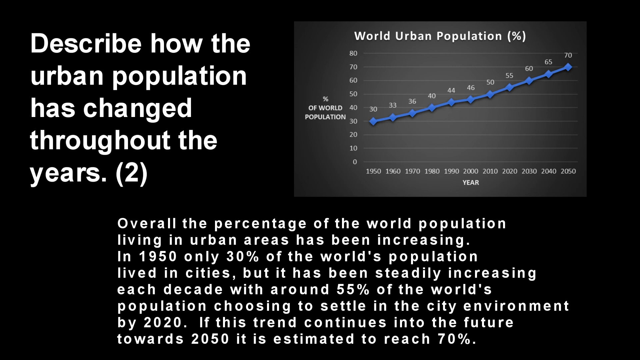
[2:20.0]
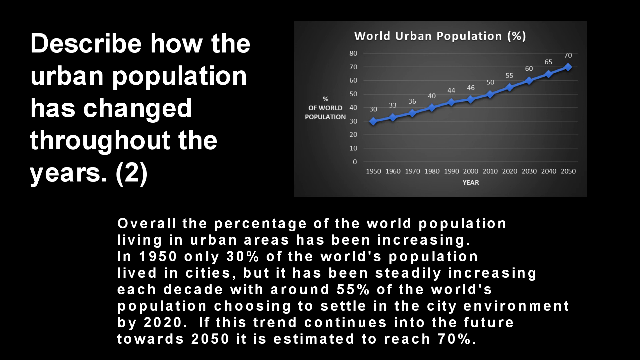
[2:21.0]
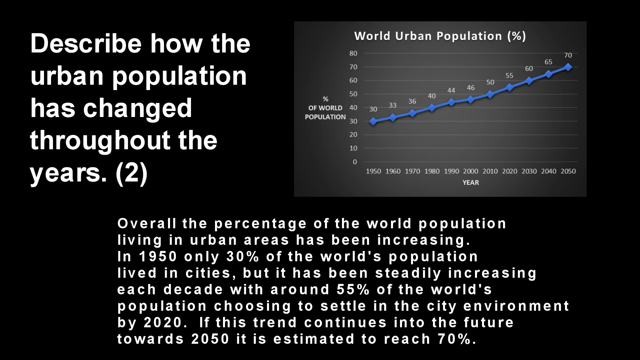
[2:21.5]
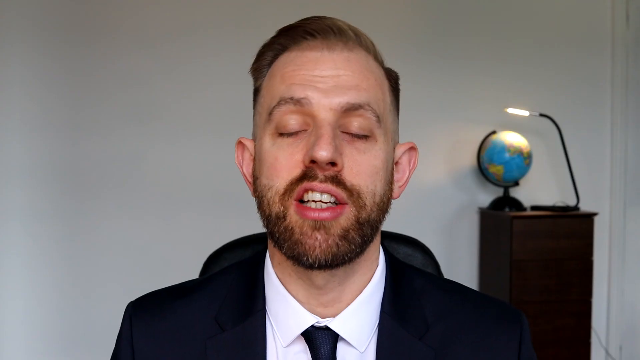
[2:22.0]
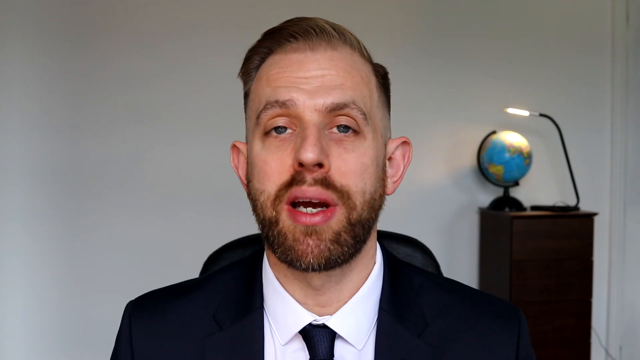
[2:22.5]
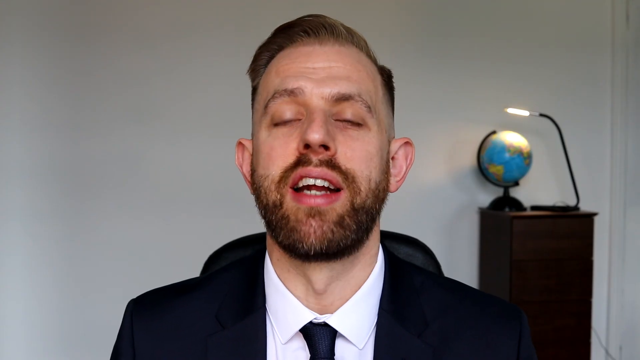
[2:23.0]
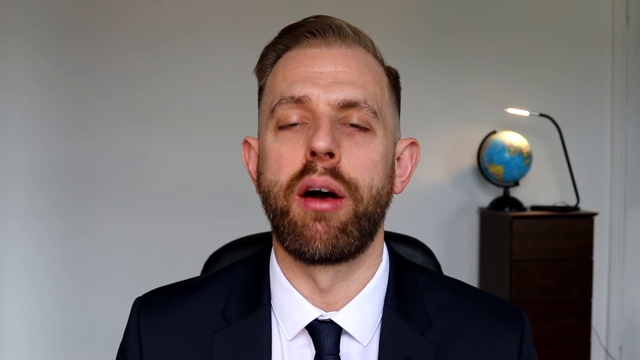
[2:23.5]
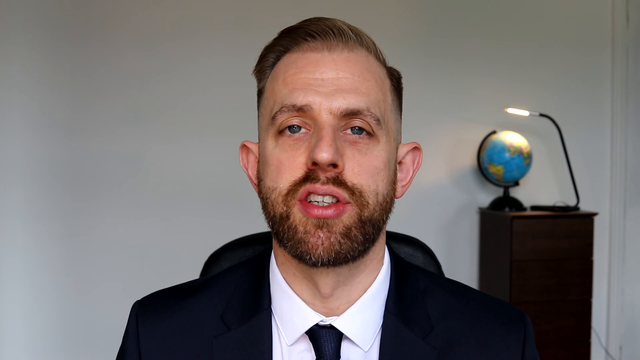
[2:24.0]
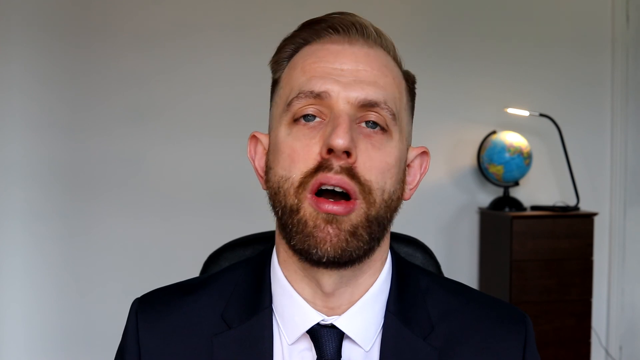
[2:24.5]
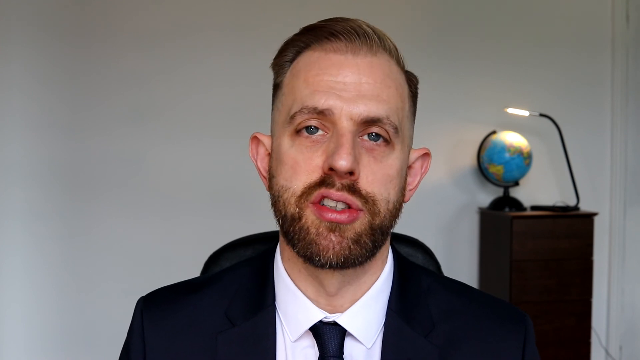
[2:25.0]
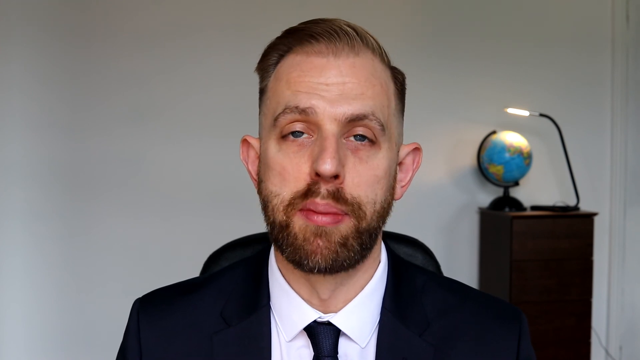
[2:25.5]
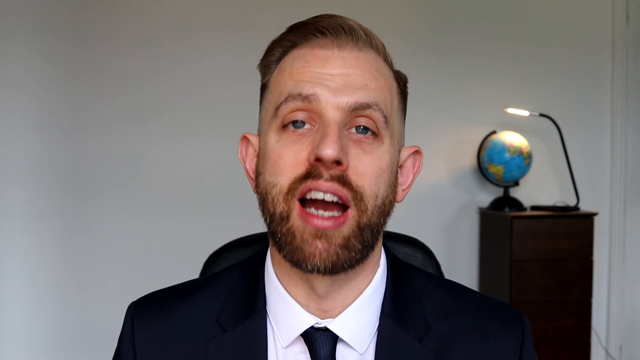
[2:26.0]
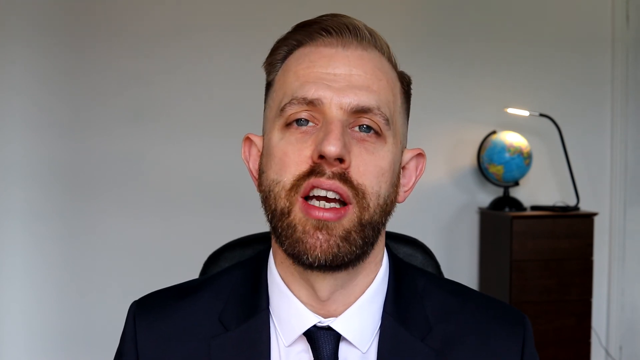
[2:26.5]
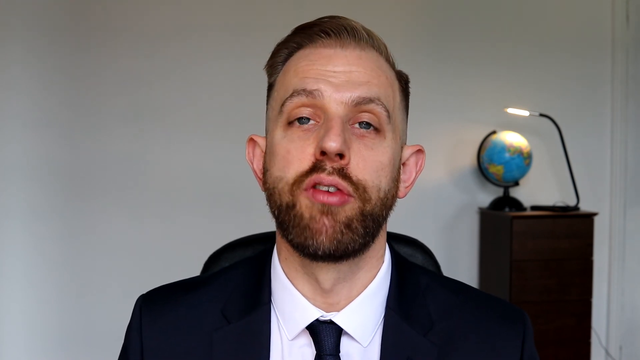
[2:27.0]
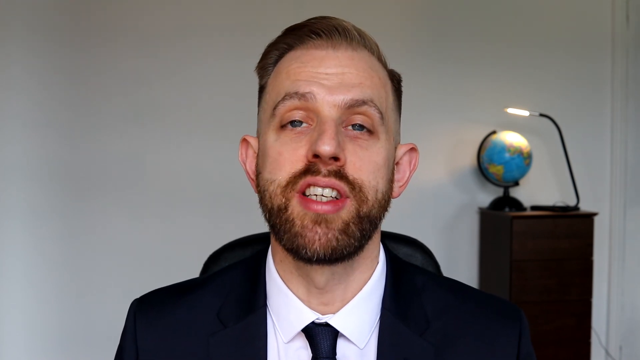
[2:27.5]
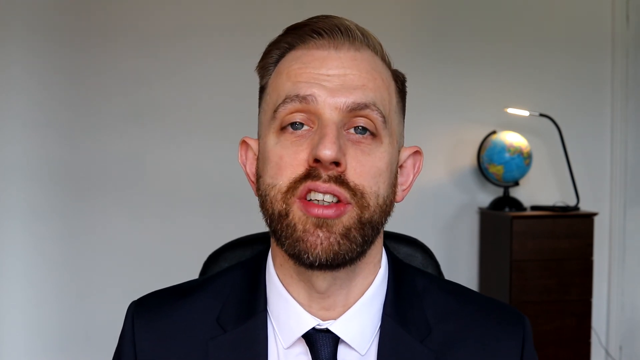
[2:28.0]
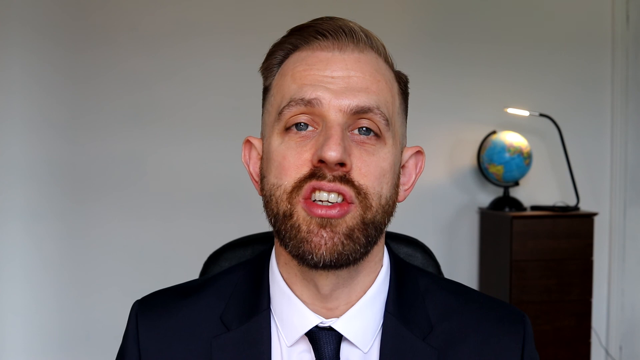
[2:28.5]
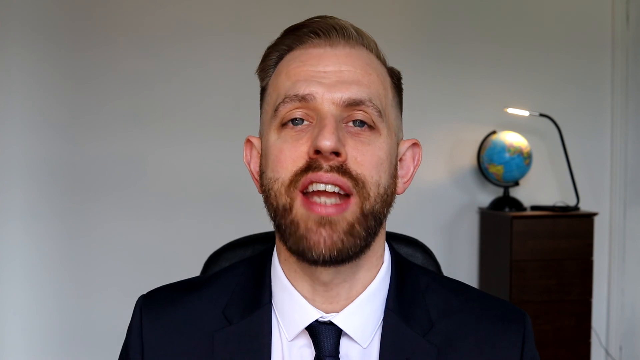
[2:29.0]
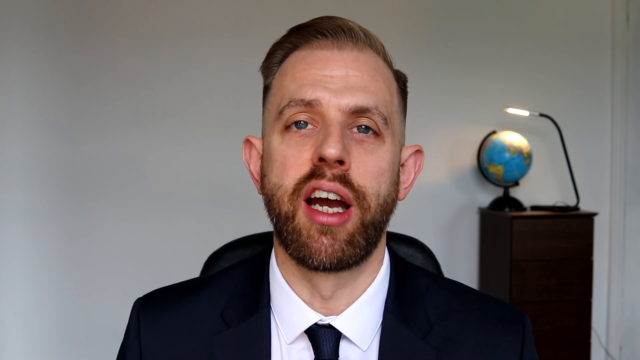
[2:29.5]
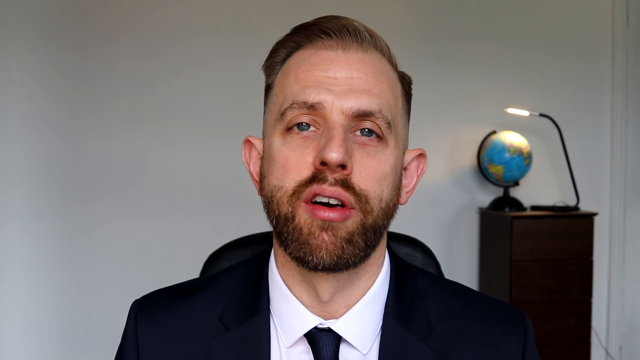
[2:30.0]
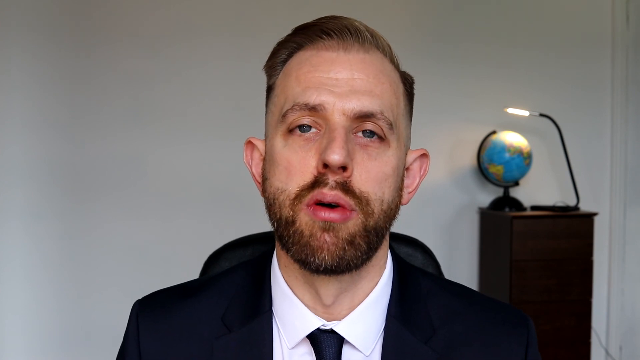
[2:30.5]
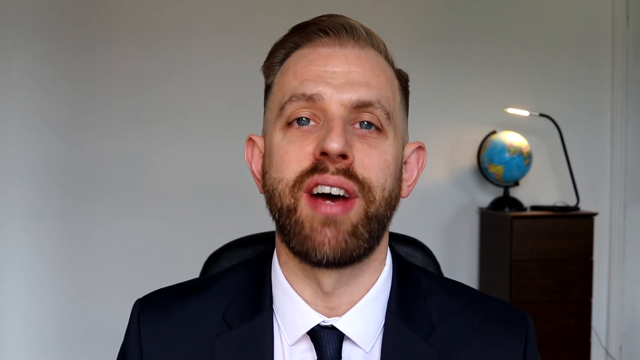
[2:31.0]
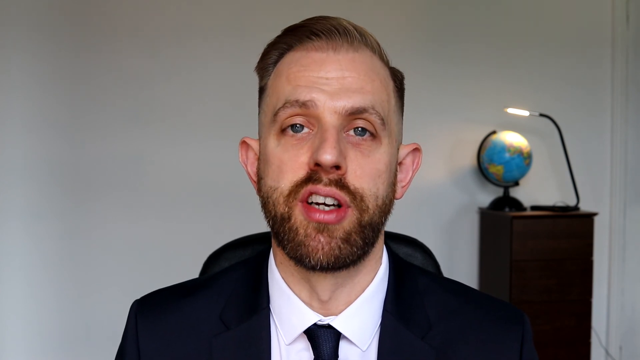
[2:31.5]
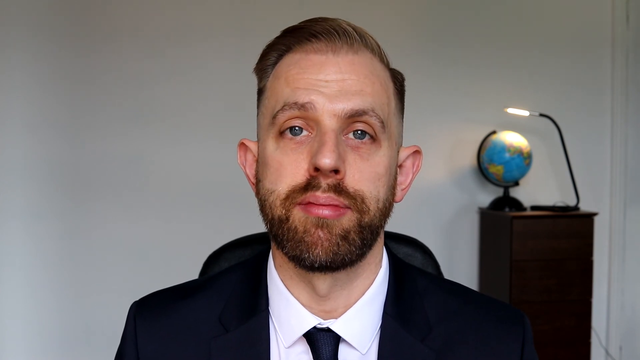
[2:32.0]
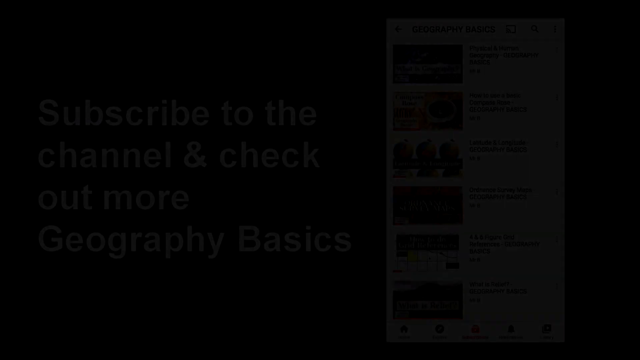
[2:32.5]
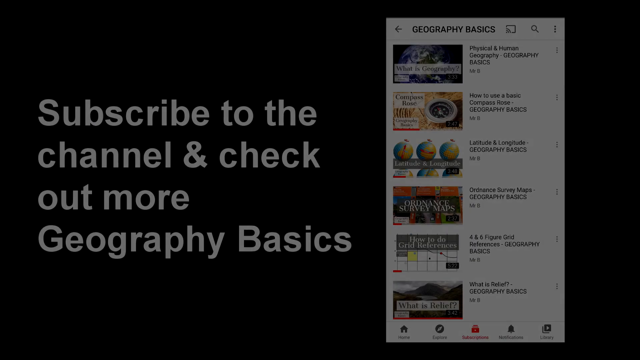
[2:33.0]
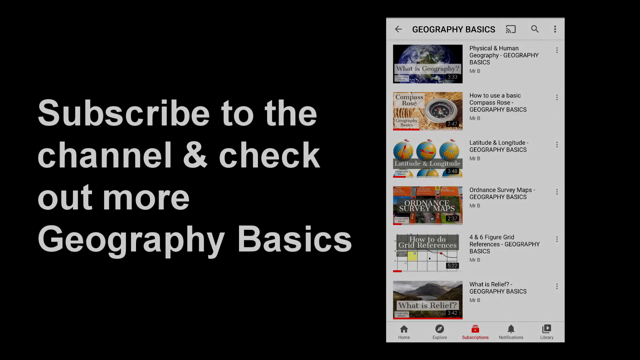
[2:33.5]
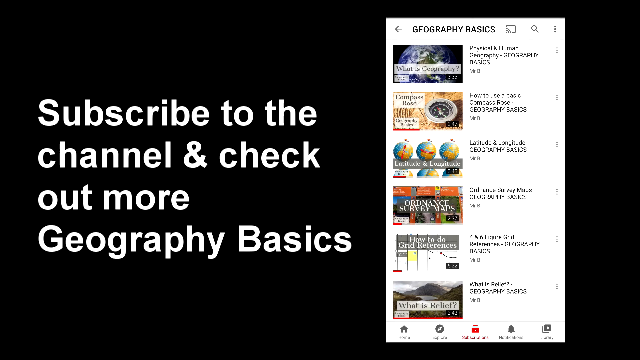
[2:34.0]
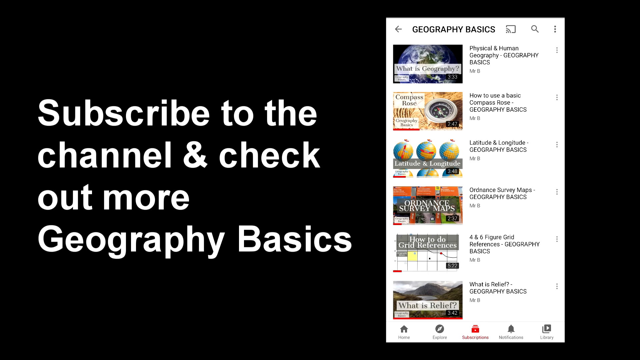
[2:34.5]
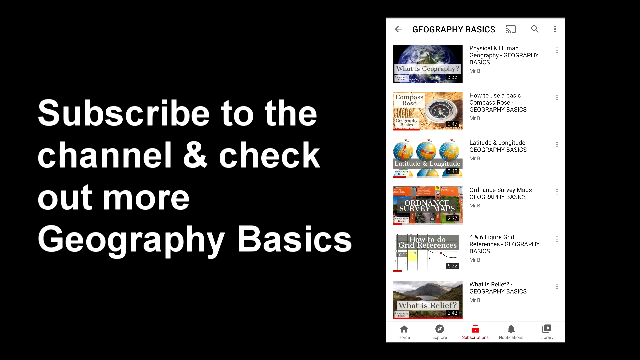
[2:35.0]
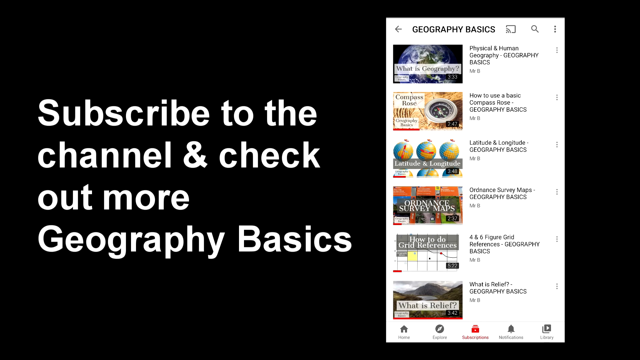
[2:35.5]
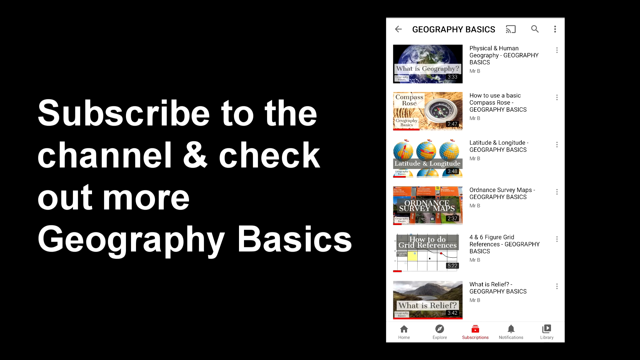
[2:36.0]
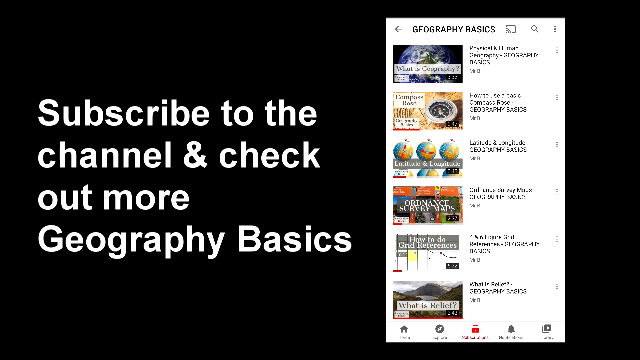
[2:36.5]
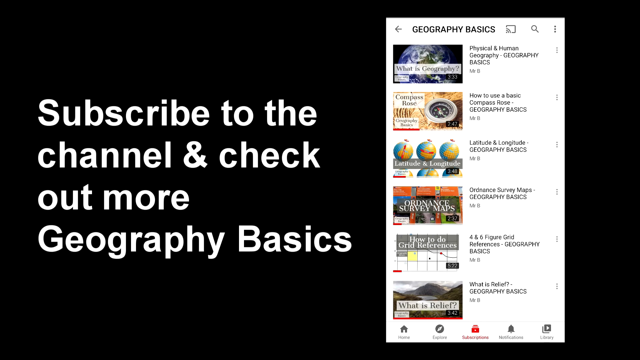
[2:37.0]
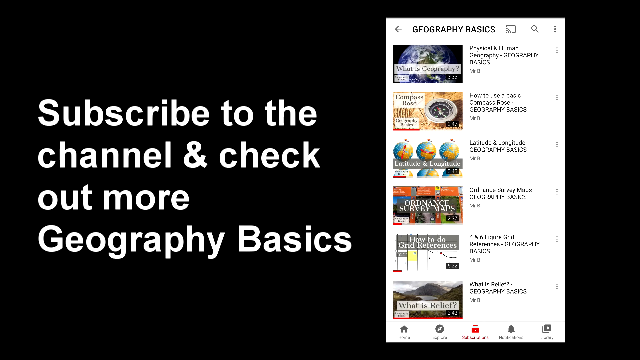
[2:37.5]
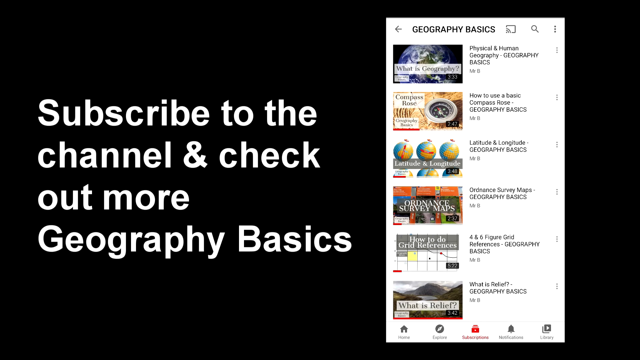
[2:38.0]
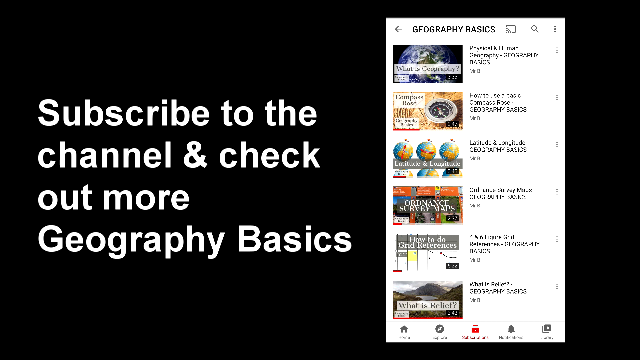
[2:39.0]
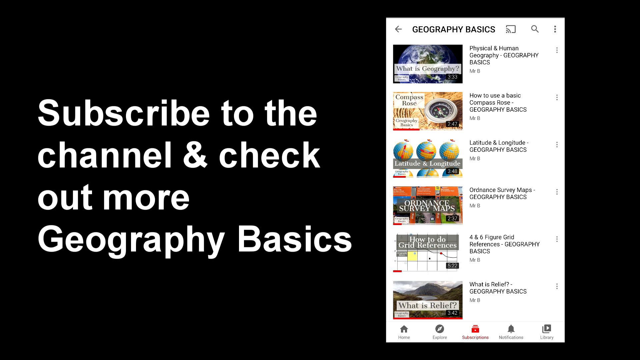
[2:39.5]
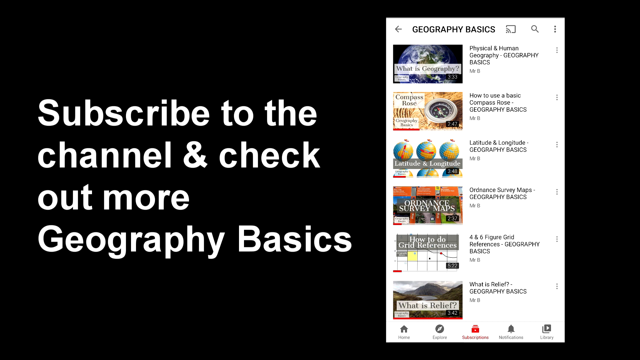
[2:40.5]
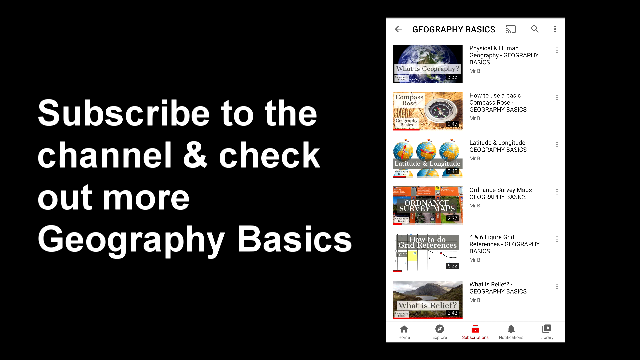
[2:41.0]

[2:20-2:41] The graph about describing population change is still shown, then the video cuts to the man talking in the white room; he looks like a teacher. The video alternates between the charts and the man in the room, ending with him talking in the room.